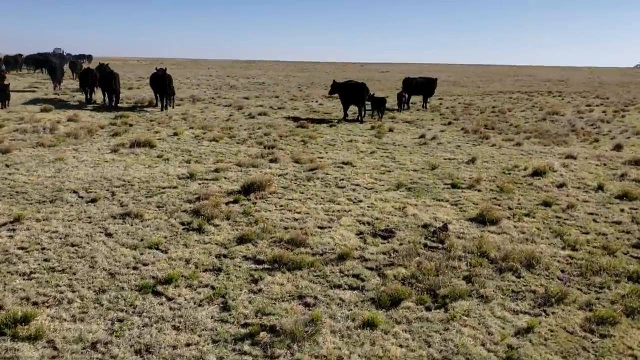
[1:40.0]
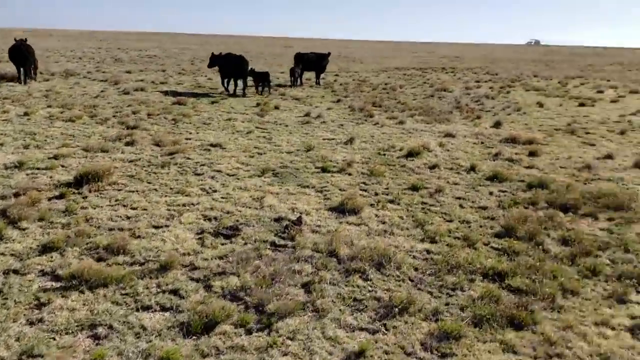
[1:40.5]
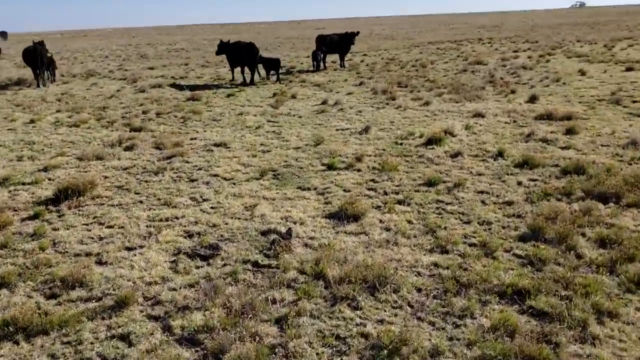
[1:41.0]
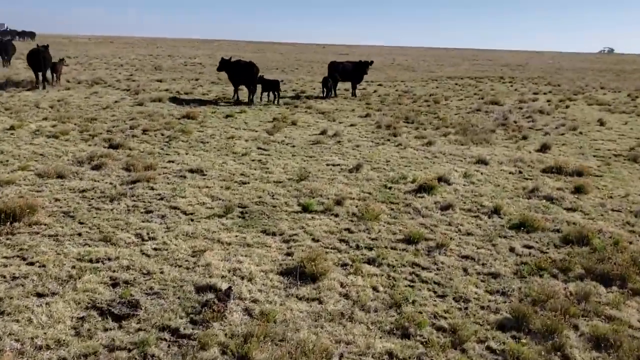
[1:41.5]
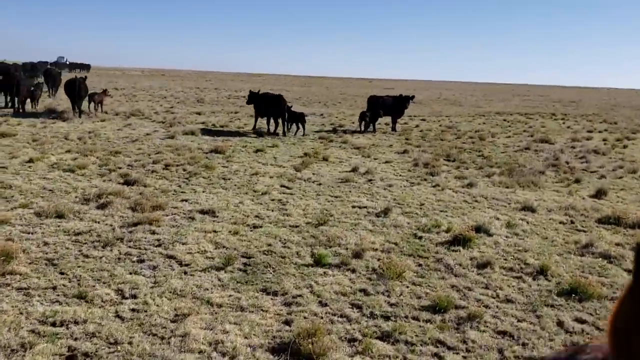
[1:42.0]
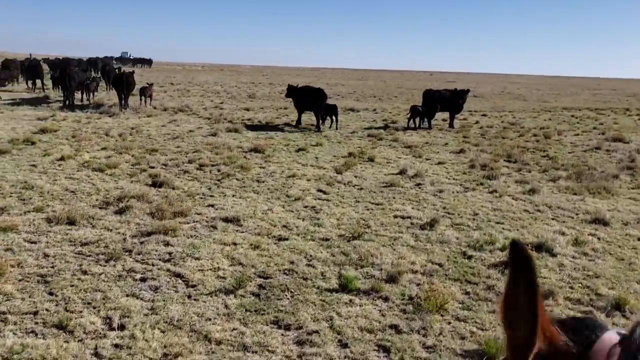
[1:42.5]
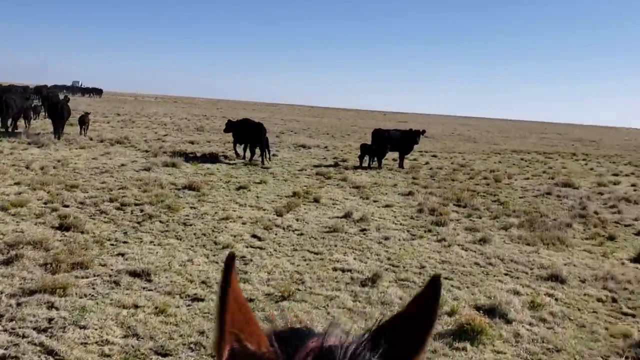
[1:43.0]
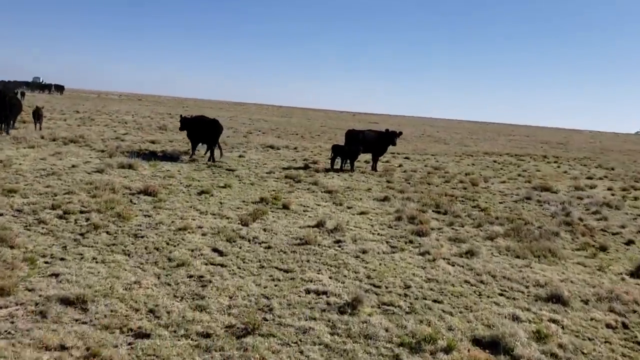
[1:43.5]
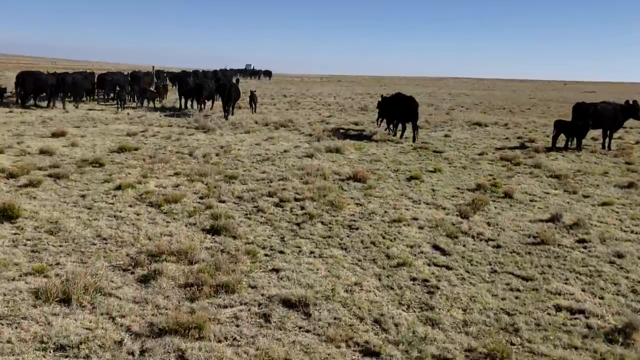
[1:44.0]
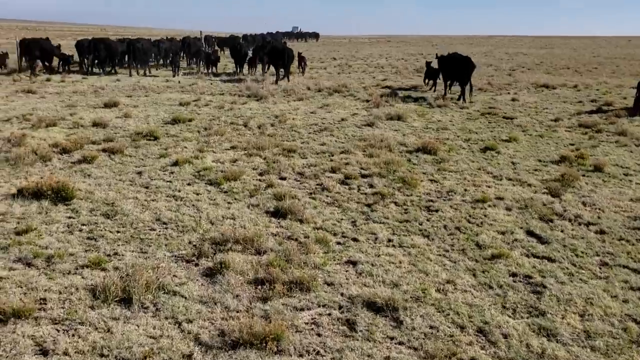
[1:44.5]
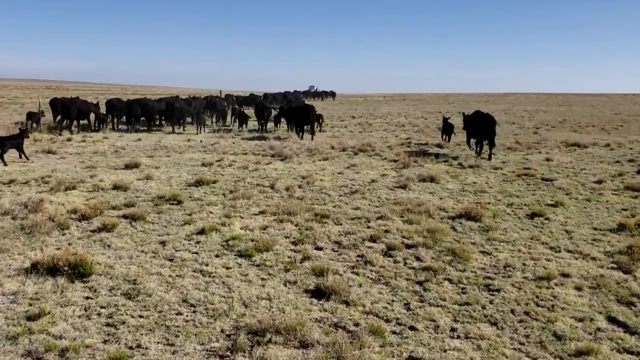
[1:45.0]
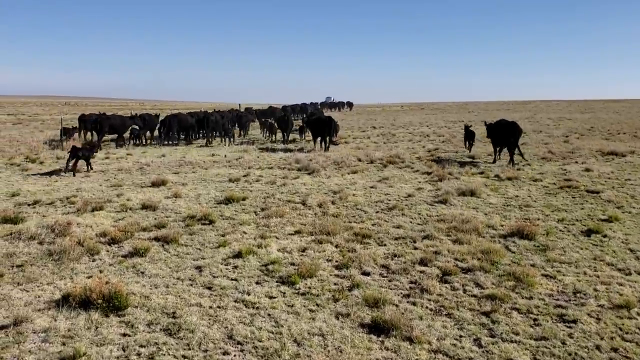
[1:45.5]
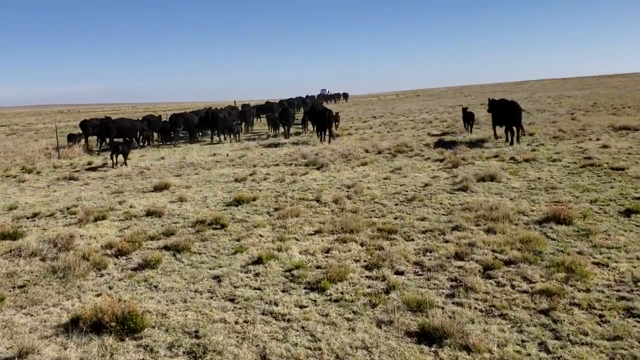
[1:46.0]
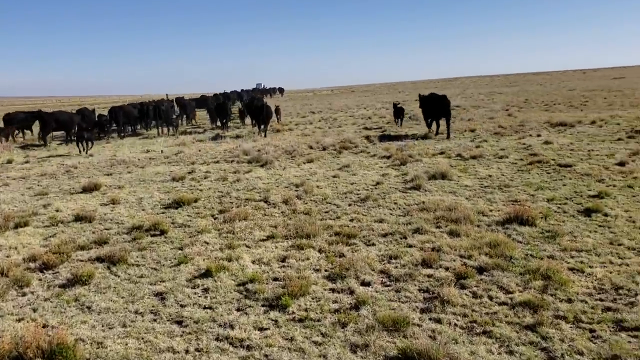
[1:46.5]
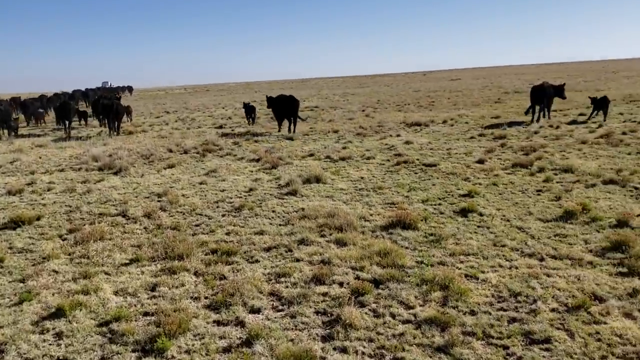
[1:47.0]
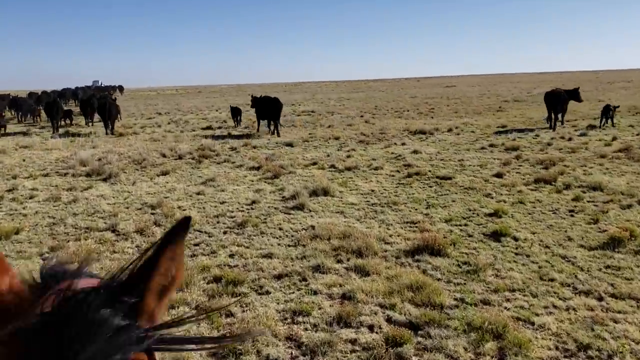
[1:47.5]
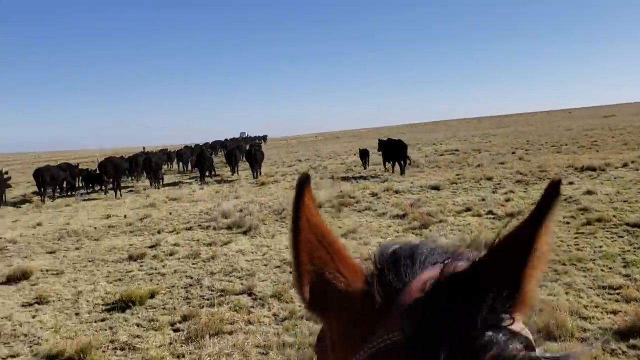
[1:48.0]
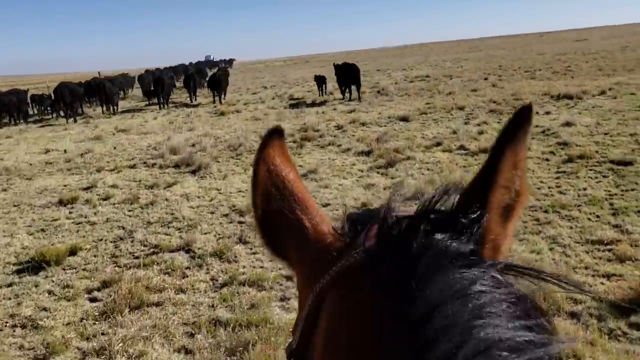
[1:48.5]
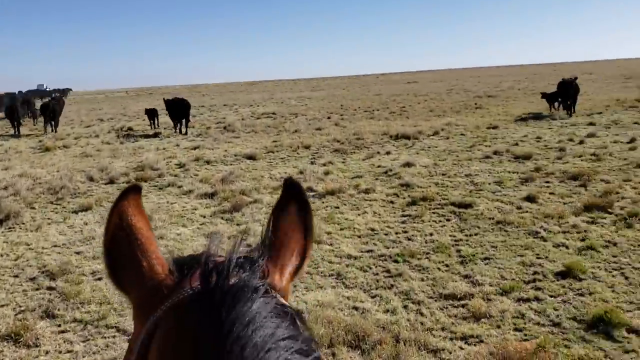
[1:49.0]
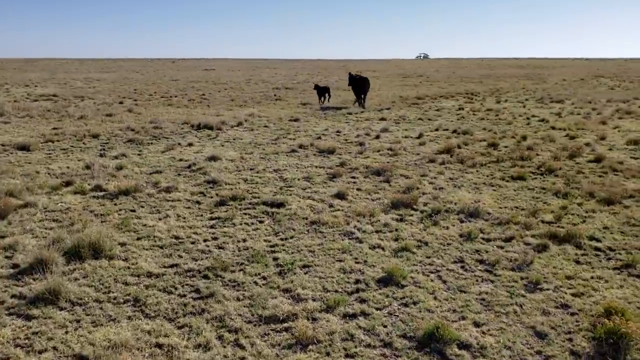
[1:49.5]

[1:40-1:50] The four strays are two adults and two calves. They stand about while the rancher tries to push them back to the group. The cattle then start to run, much faster. Two other cattle keep going right, and the rancher tries to get them; they look disoriented. They are an adult and a calf, and the calf seems disoriented, kind of running in place. The rancher tries to retrieve these two, which have gone to the far right of the field.